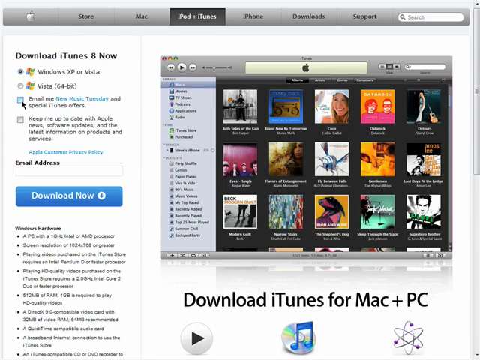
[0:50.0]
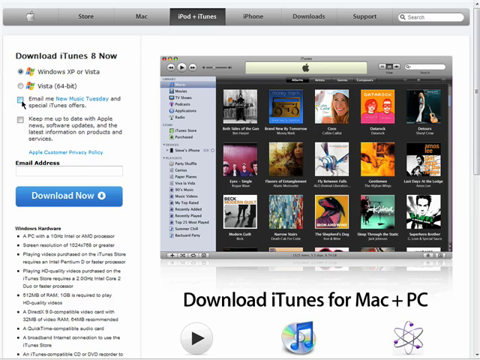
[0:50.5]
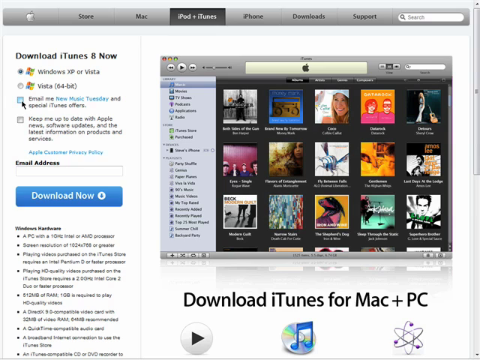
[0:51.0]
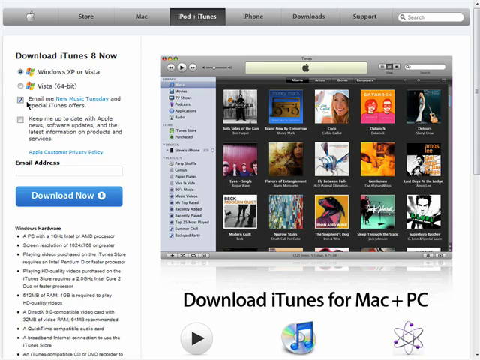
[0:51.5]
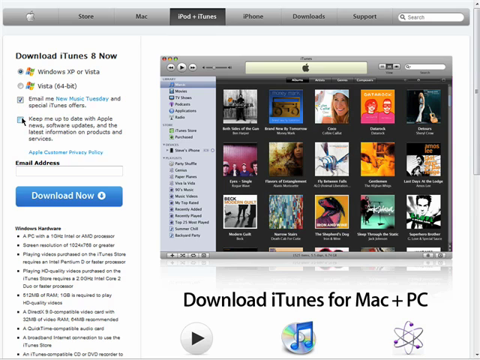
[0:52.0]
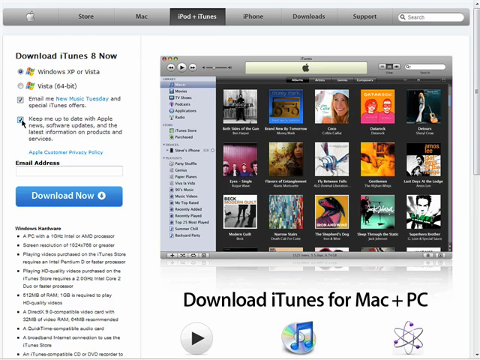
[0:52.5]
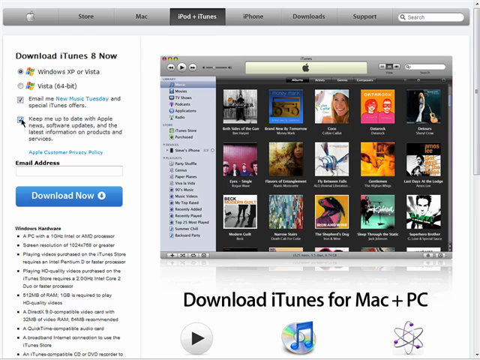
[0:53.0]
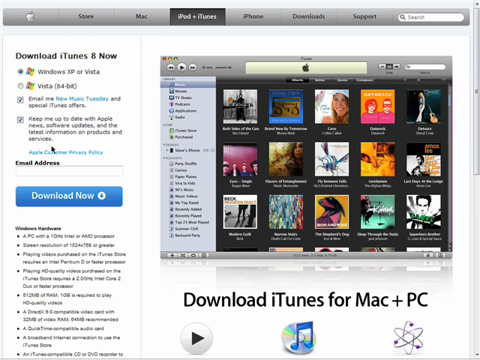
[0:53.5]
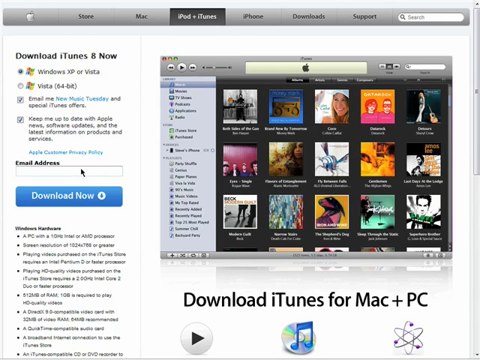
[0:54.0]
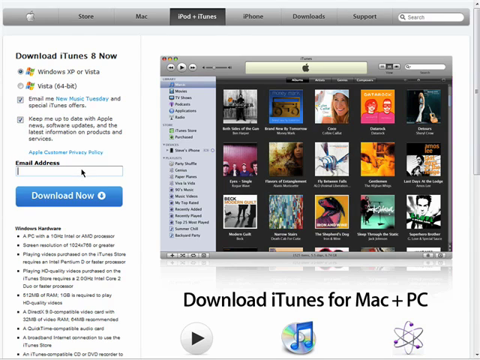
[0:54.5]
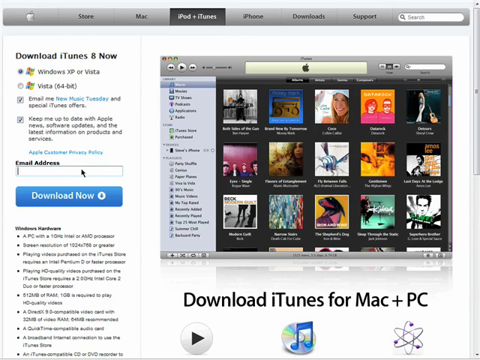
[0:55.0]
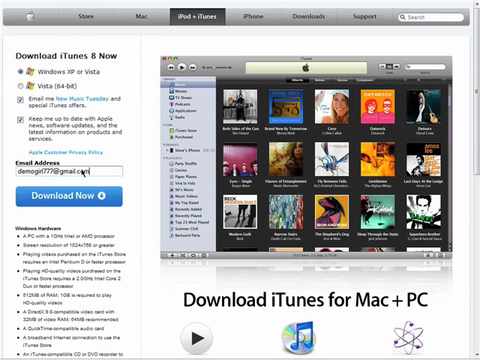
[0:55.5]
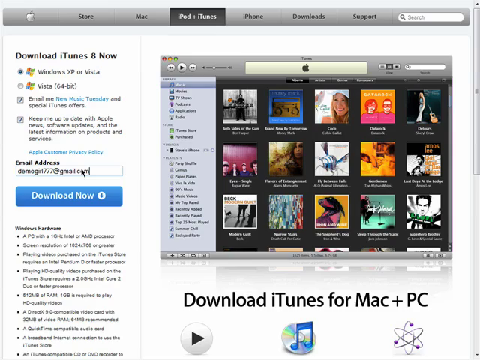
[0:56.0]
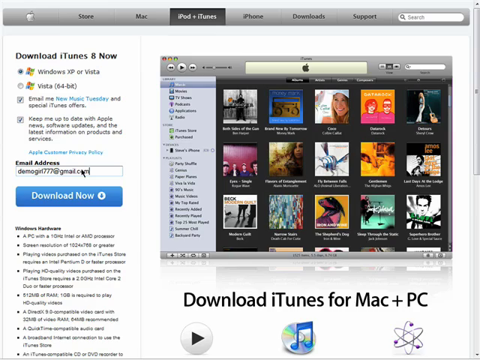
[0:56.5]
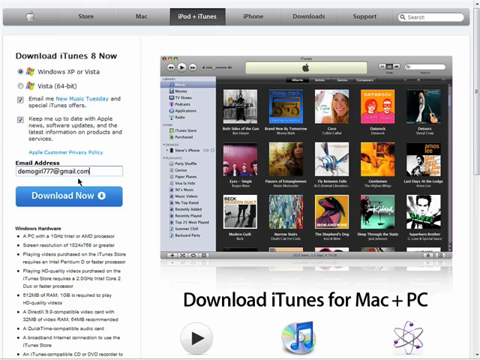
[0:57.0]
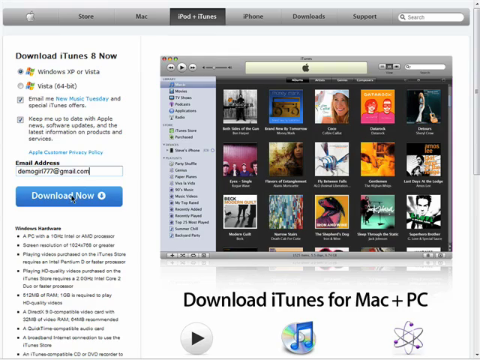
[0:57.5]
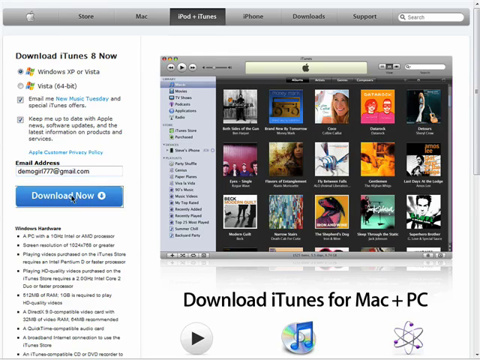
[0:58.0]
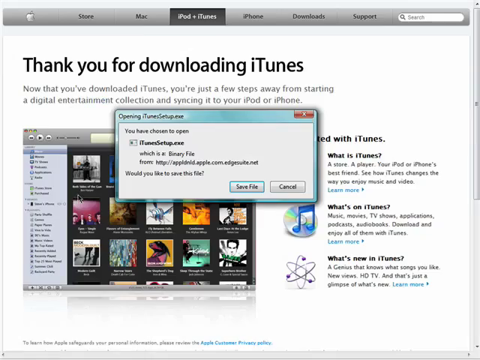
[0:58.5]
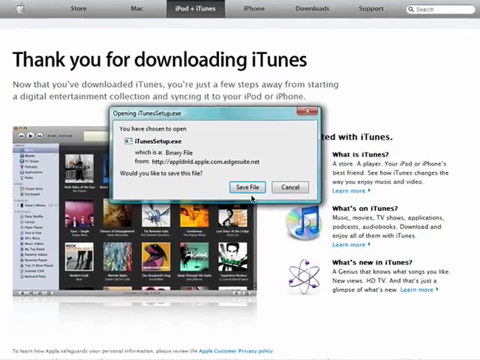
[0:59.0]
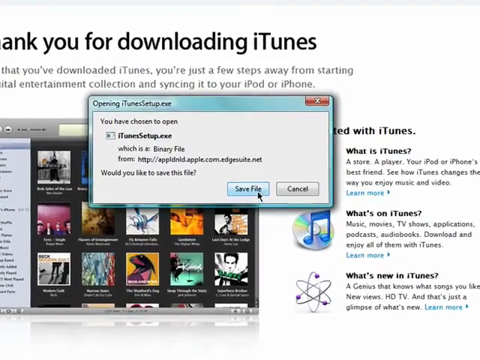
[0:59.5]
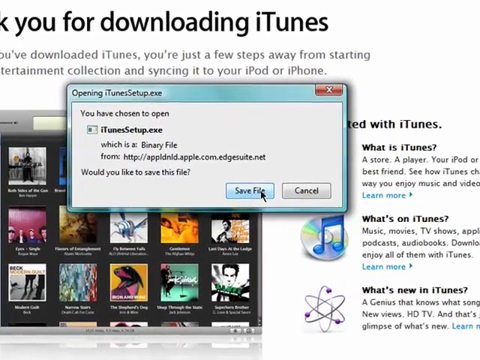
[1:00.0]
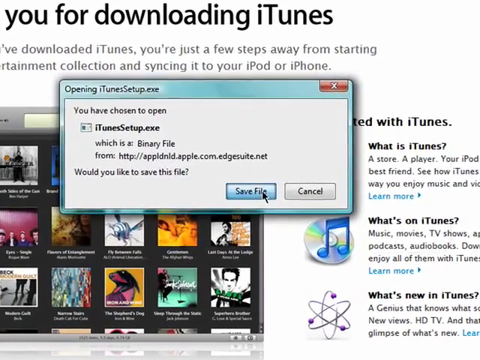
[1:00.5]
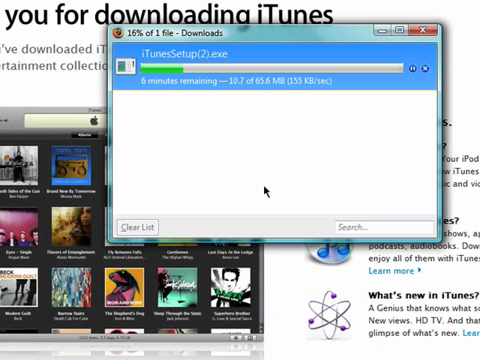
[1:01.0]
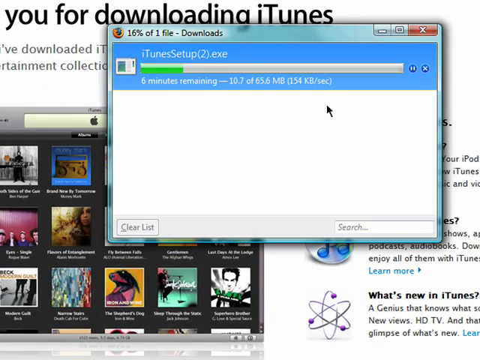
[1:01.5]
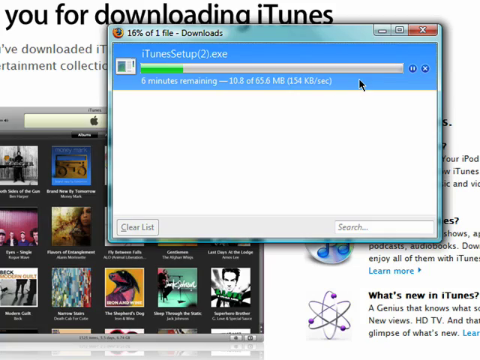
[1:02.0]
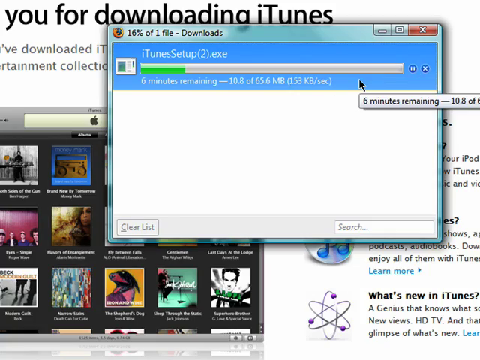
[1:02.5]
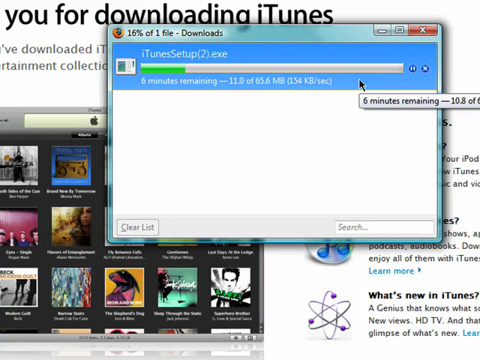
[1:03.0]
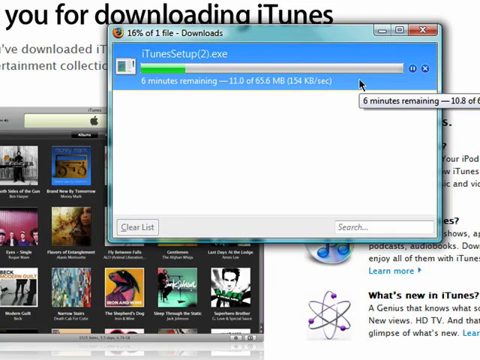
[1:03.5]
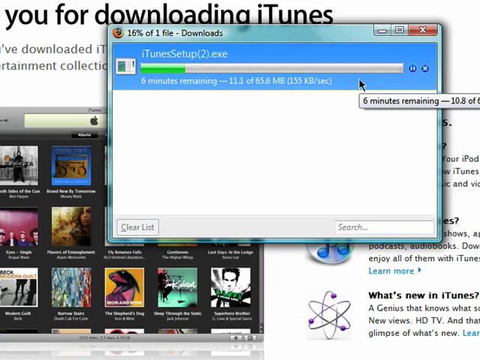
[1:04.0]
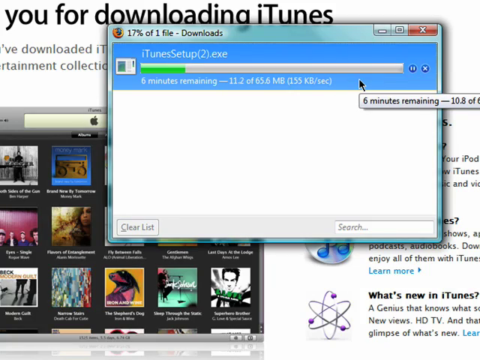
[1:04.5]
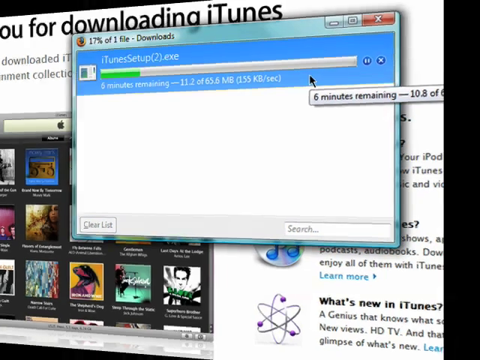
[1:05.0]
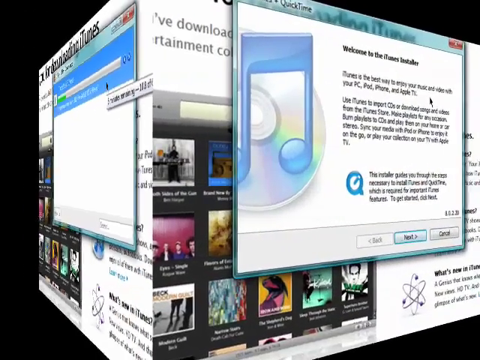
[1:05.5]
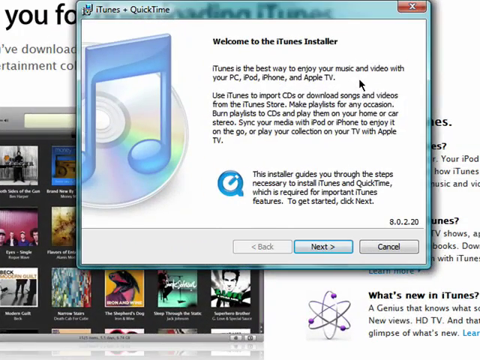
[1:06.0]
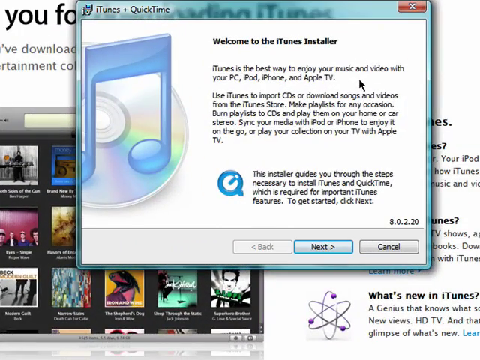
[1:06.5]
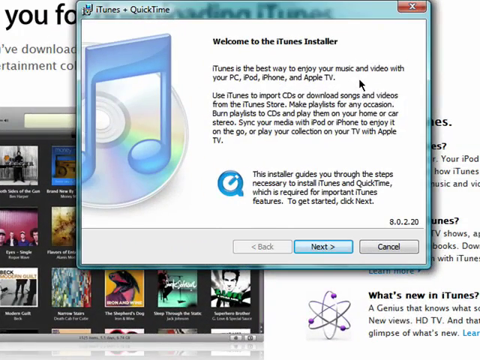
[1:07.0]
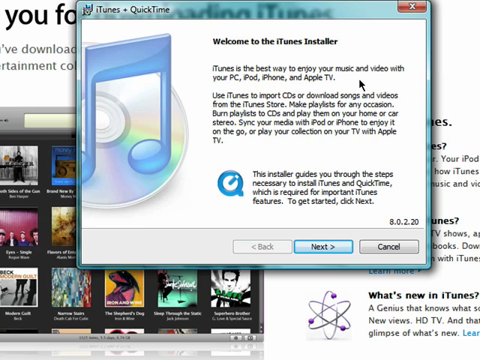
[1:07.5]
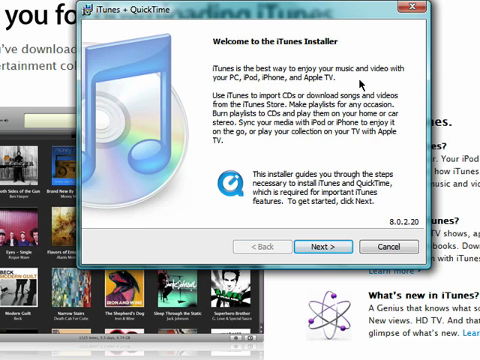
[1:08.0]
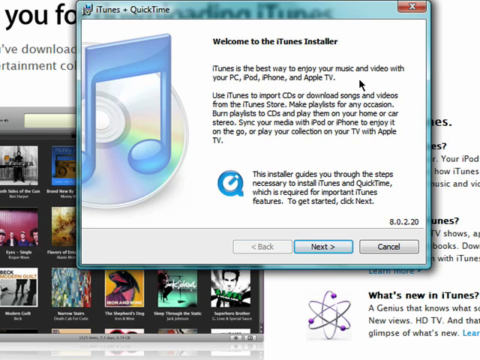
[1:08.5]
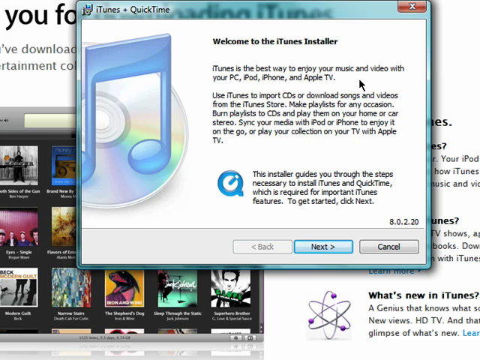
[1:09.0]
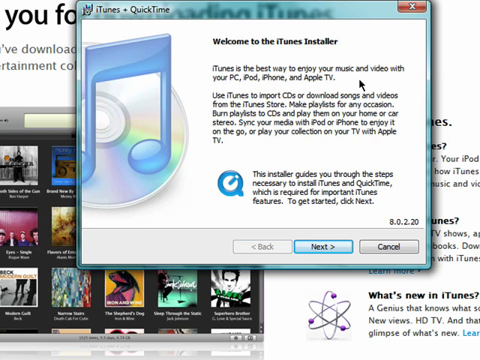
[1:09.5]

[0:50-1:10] The page is unchanged, still on the third tab at the top. The tabs read "Store," "Mac," "iPad plus iTunes," then "iPhone," "Downloads" and "Support," and on the right-hand side is an oval search box with "search" in it and a magnifying glass. On the left-hand side is a box labelled "email address" in bold black, and underneath is a blue rectangle with "download now" in white. On the right side it says "download iTunes for Mac and PC." The person clicks two checkboxes on the left: "email me new Music Tuesday and special iTunes offers" and "keep me up to date with Apple news, software updates, and the latest information on products and services." The email address entered looks like demo girl 777 at Gmail. The mouse hovers over "download now," and a pop-up appears saying "you have chosen to" open "iTunes setup.exe"; the person hovers over "save file." Six minutes remain until the download is complete. Then the screen says "welcome to iTunes installer."